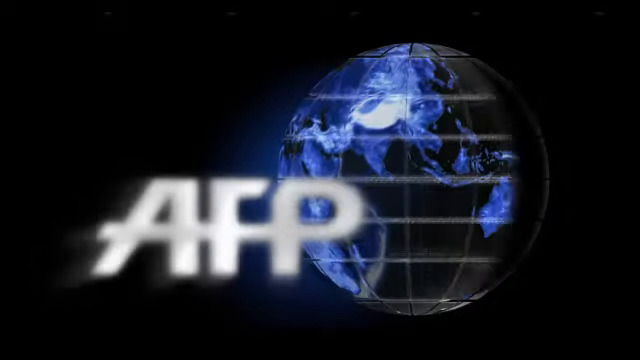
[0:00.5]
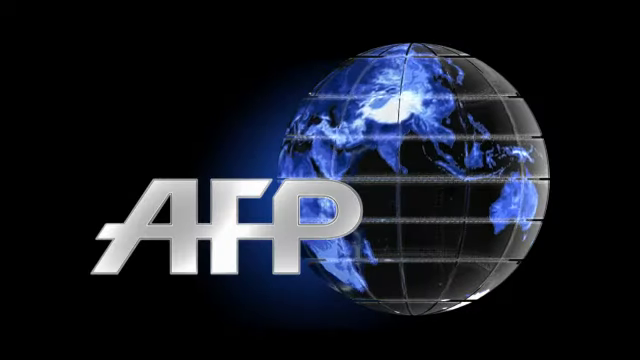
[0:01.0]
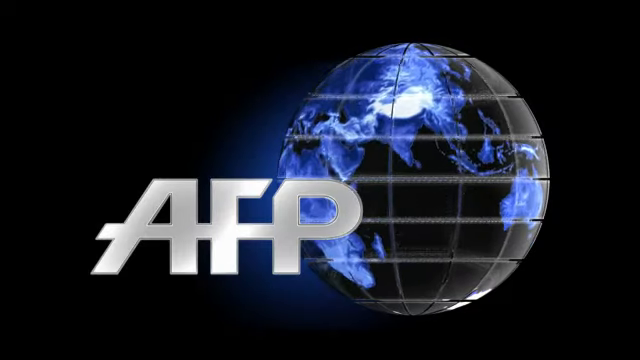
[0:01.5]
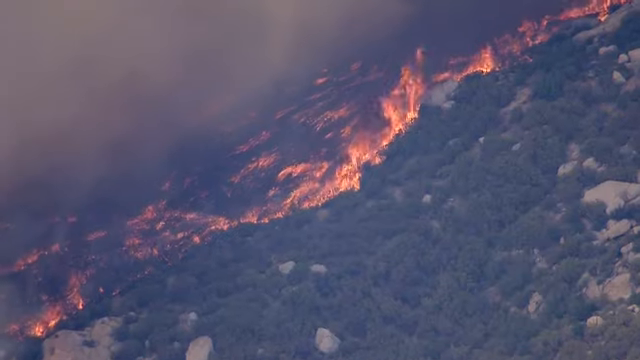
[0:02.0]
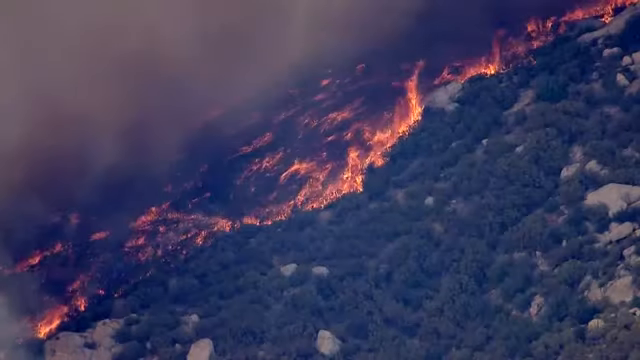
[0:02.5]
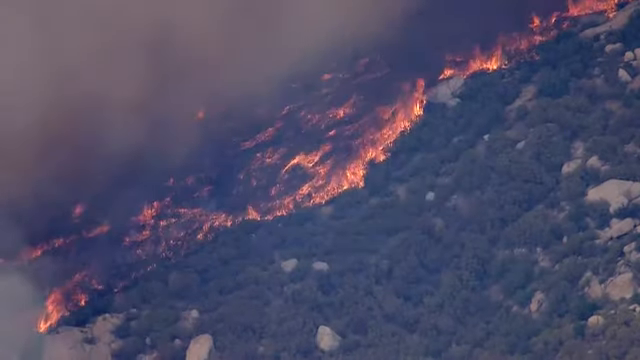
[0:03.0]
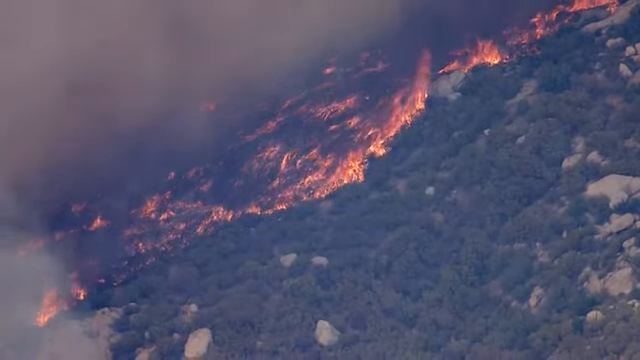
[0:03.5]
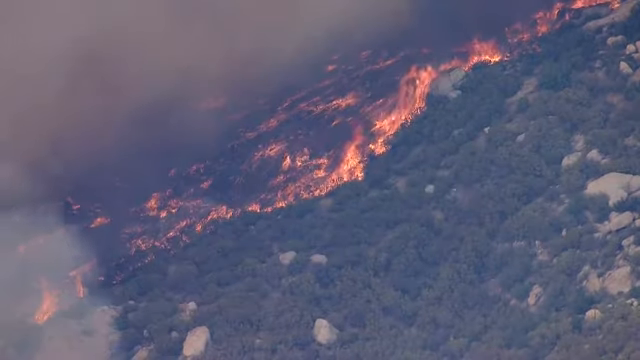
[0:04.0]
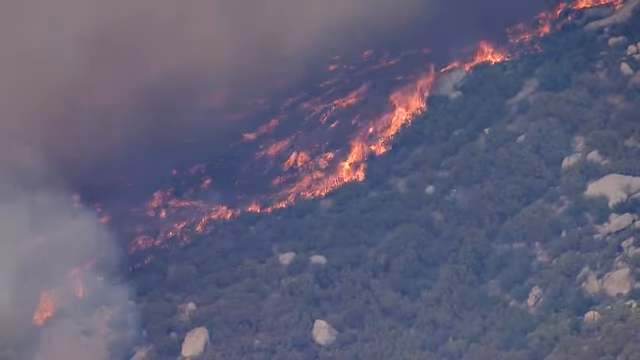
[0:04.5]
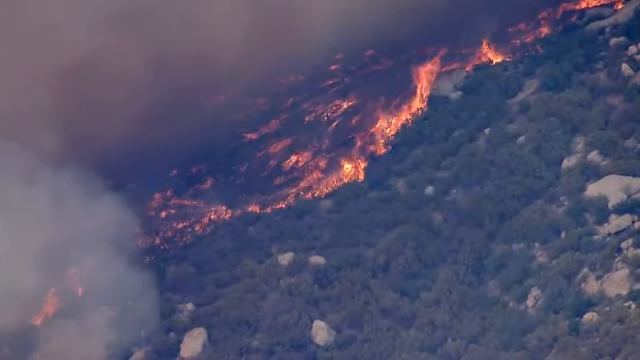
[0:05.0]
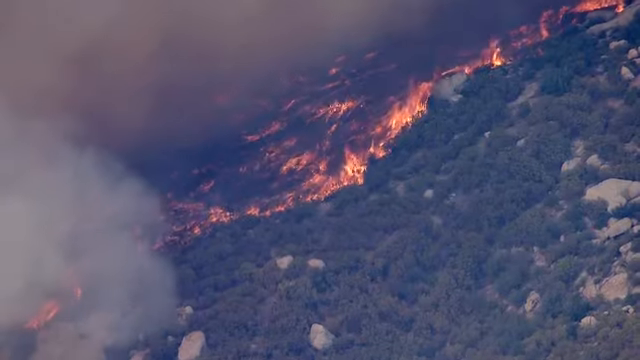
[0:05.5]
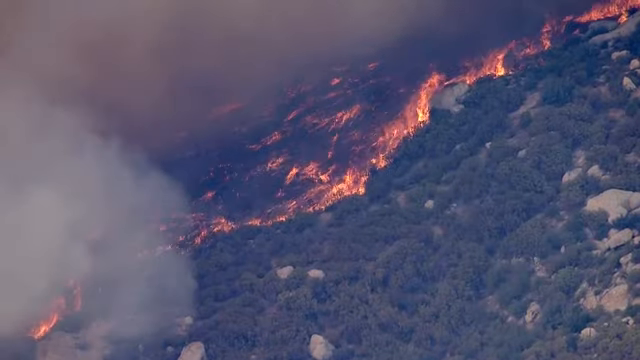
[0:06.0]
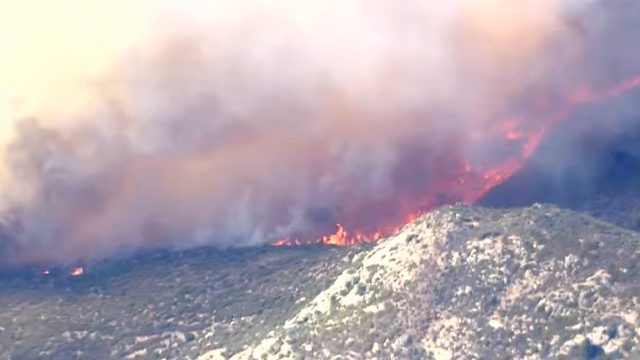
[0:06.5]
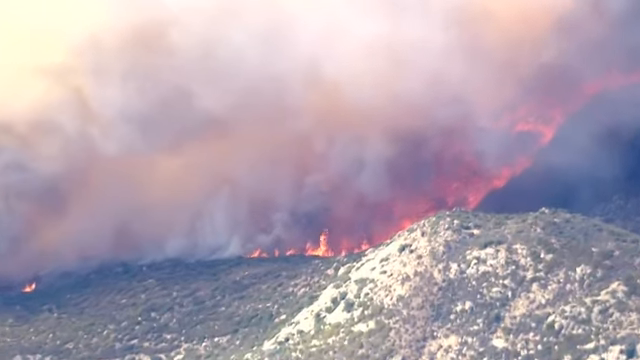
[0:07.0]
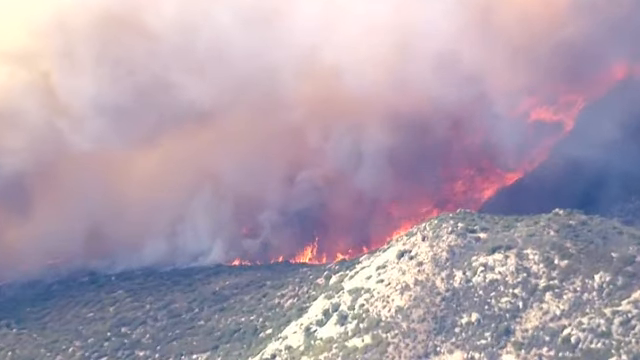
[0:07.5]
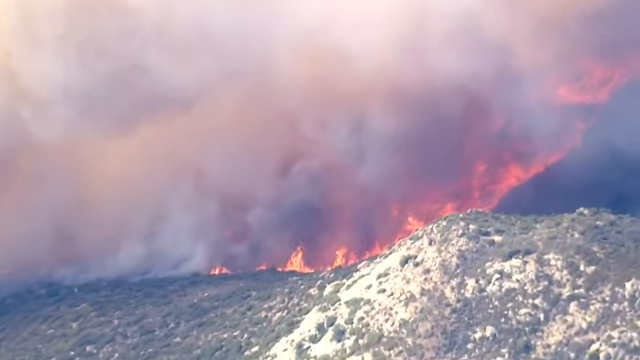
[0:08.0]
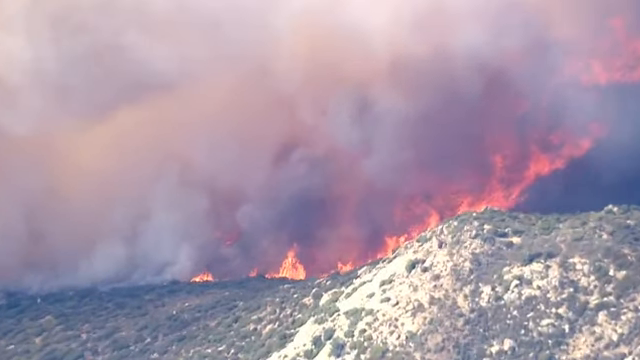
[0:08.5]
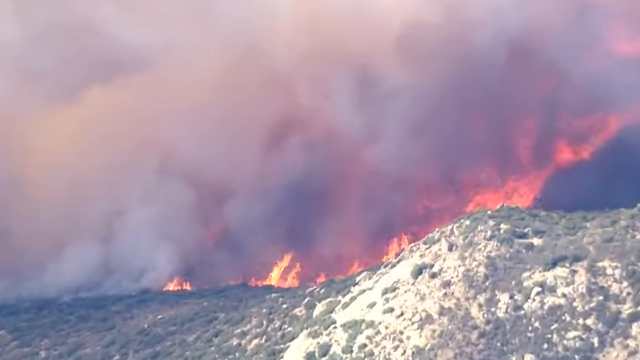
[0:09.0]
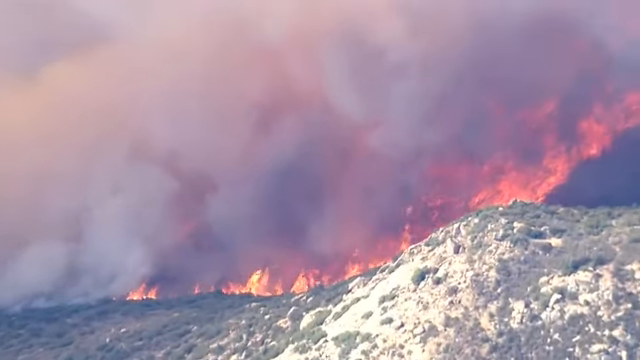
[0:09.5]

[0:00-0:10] The video opens with a 3D animated computer image of the planet Earth with some grids around it, spinning. At the bottom, "AFP" appears. A forest on fire follows: fire in the background and smoke billowing at the top, blowing slowly to the right. The image changes to another shot of lots of smoke rising, and the camera zooms in very closely on the fire. The raging fire has lots of red and orange flames, with dark white and gray smoke coming up from the ground.